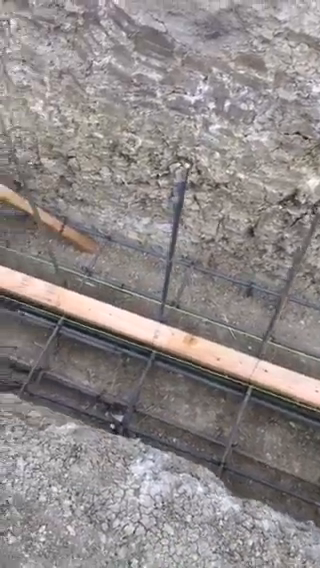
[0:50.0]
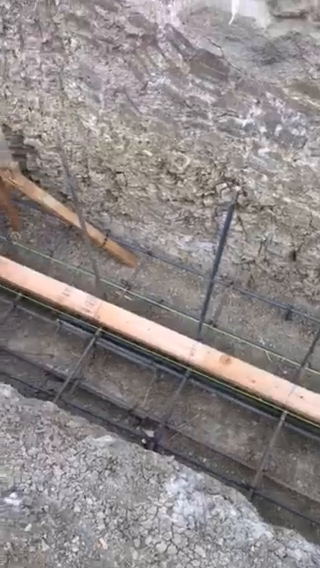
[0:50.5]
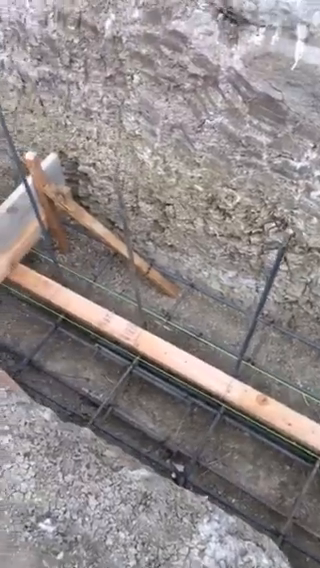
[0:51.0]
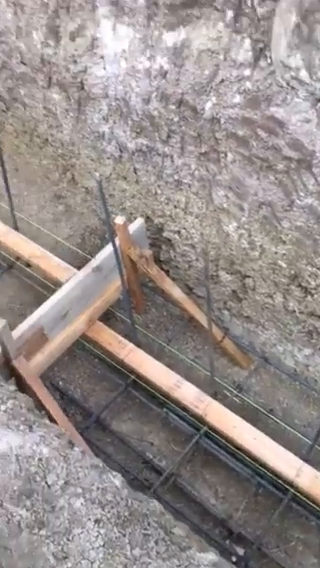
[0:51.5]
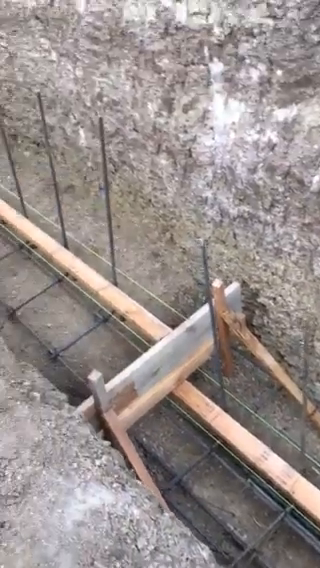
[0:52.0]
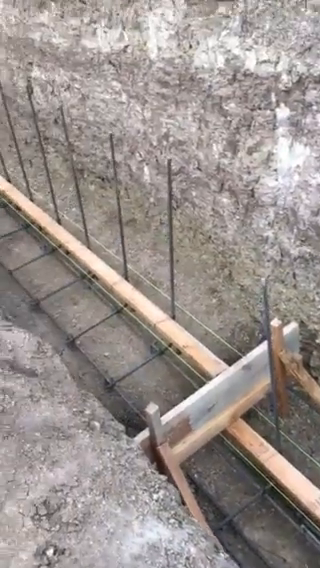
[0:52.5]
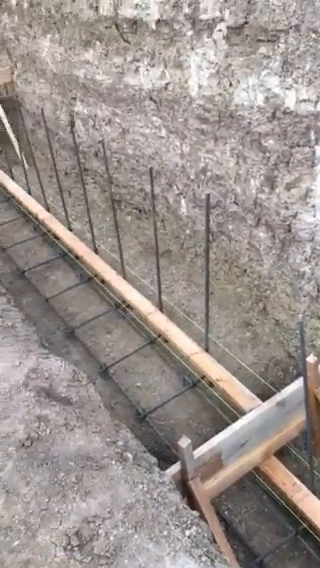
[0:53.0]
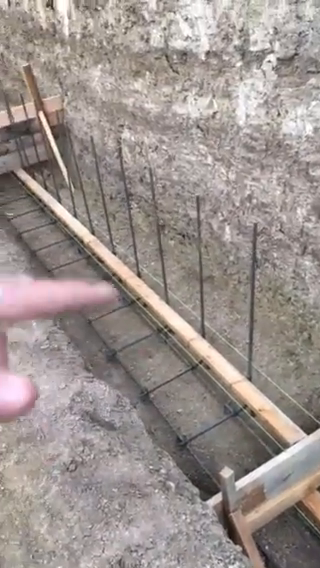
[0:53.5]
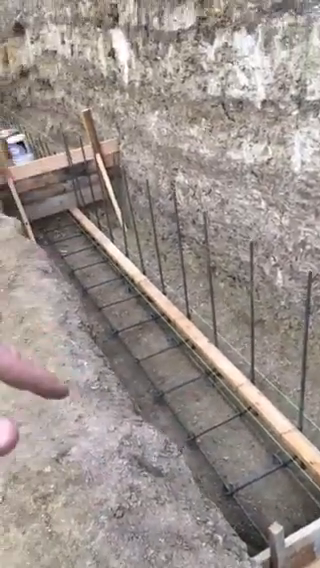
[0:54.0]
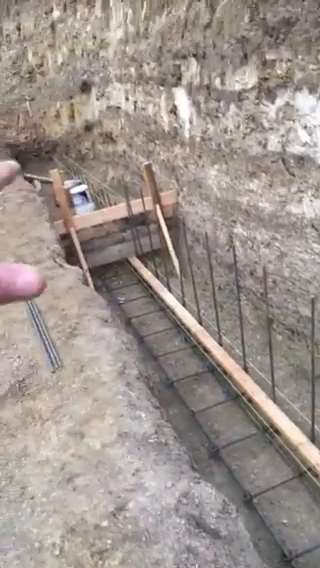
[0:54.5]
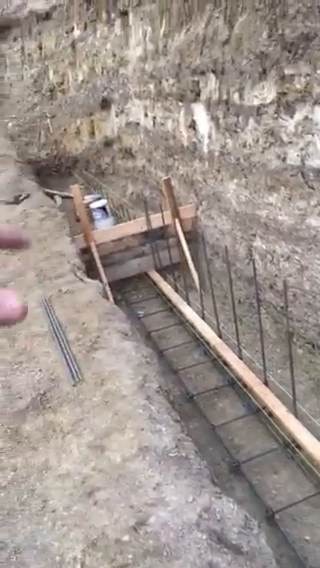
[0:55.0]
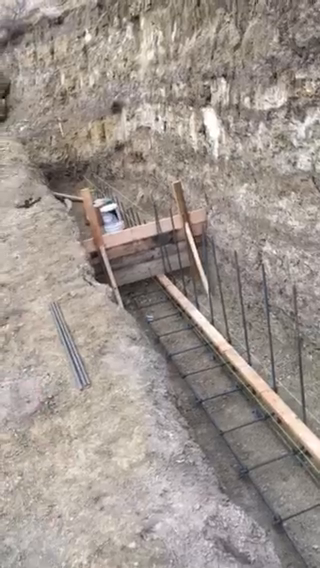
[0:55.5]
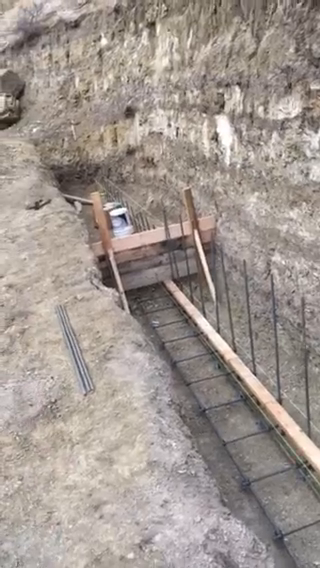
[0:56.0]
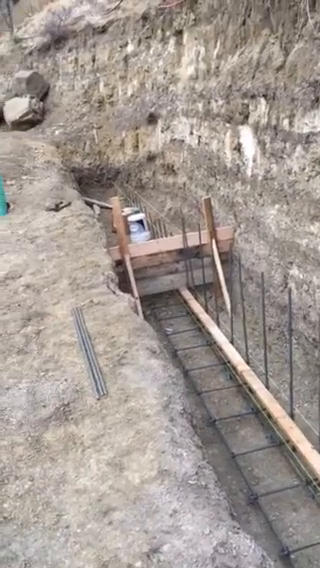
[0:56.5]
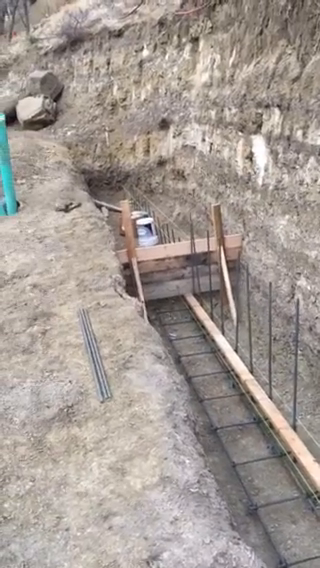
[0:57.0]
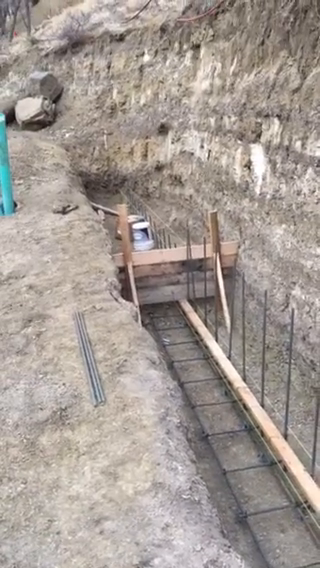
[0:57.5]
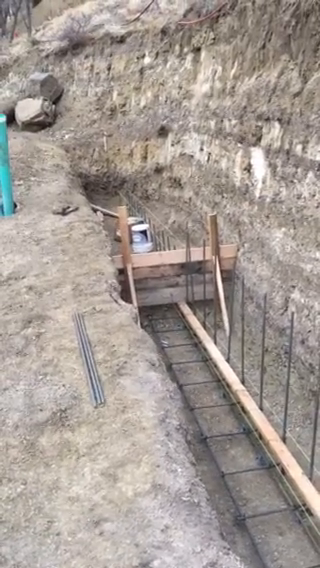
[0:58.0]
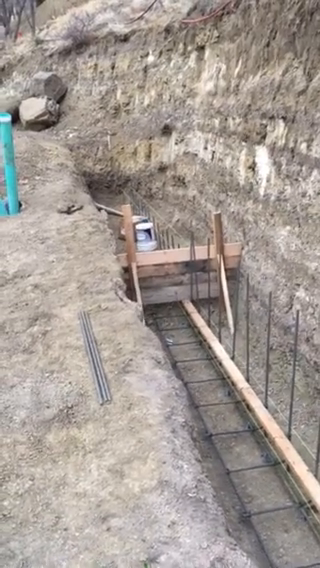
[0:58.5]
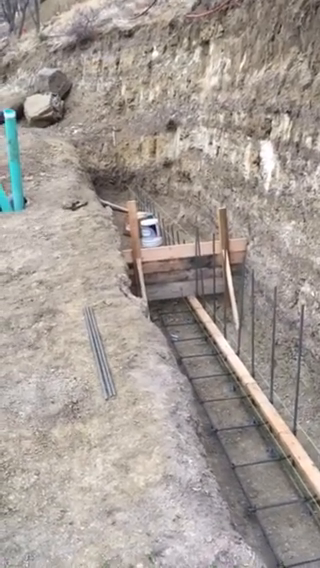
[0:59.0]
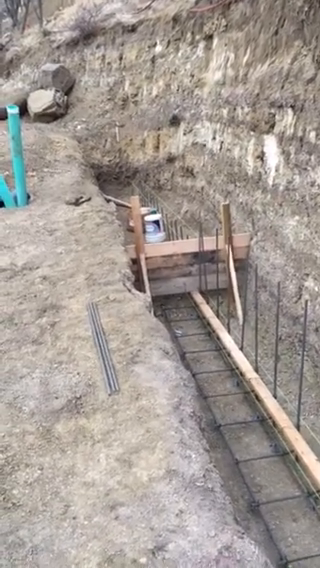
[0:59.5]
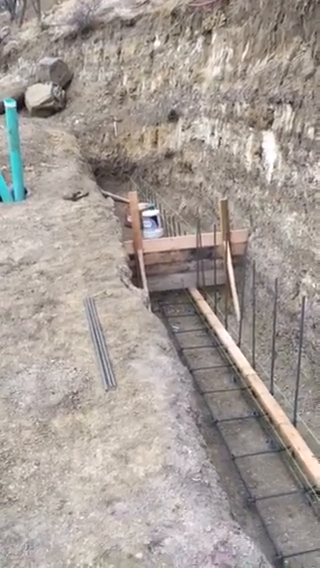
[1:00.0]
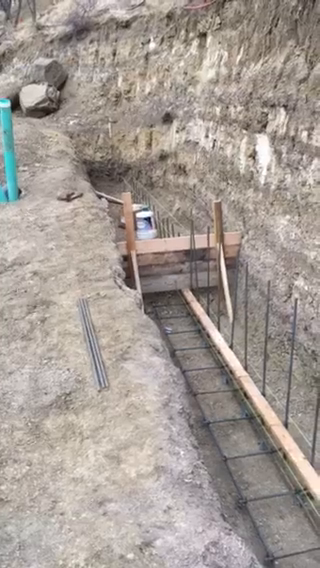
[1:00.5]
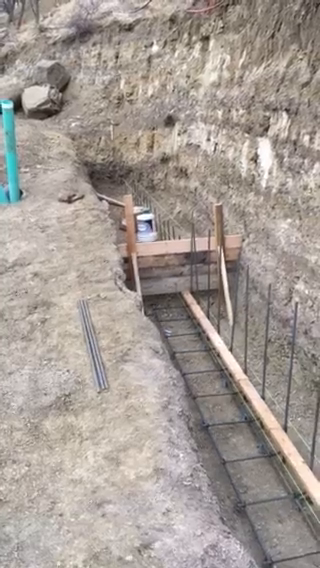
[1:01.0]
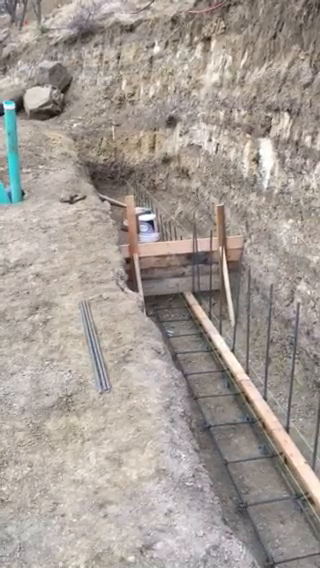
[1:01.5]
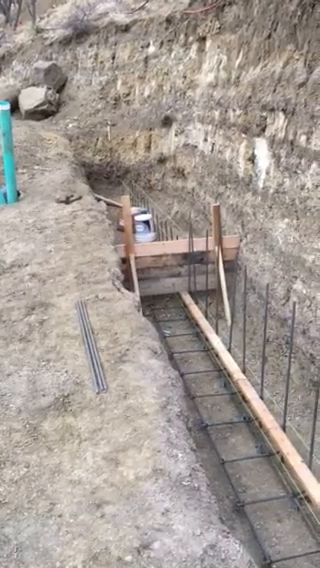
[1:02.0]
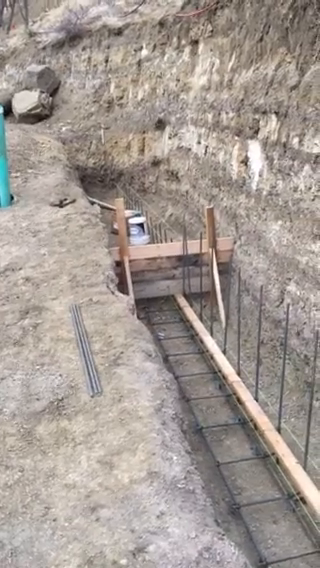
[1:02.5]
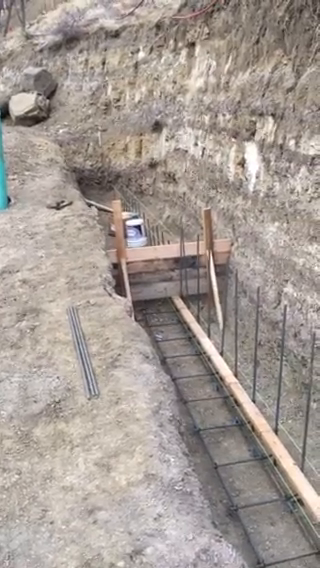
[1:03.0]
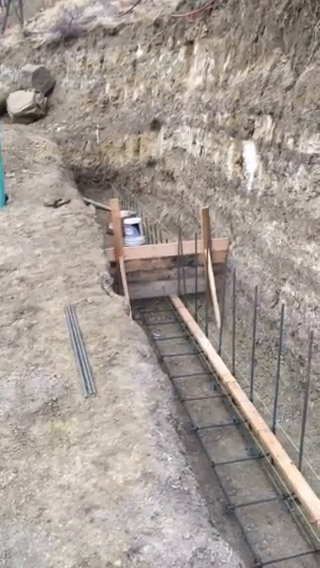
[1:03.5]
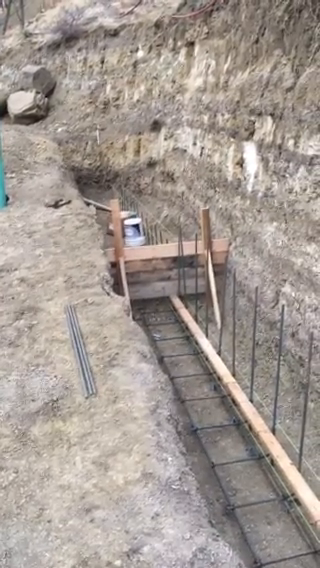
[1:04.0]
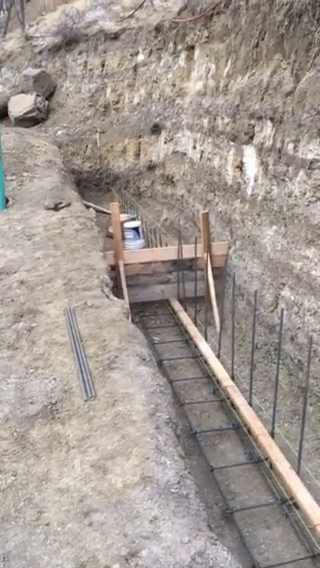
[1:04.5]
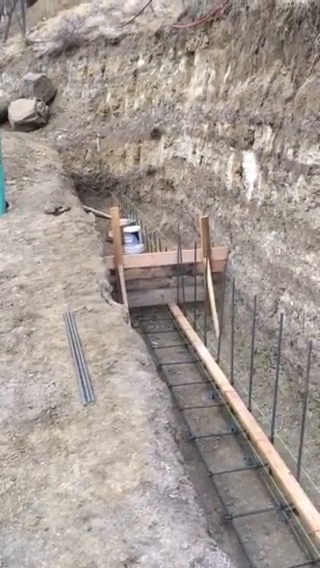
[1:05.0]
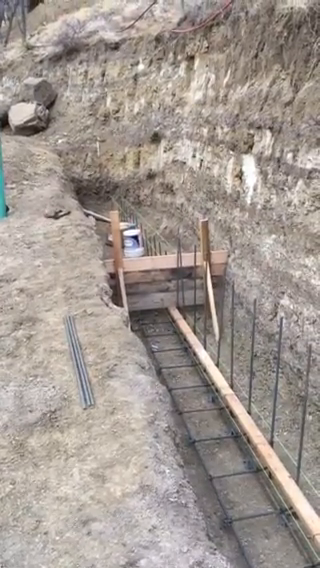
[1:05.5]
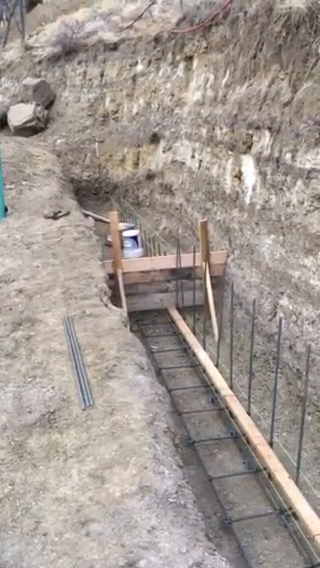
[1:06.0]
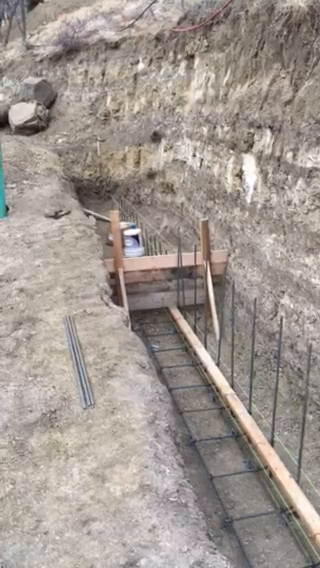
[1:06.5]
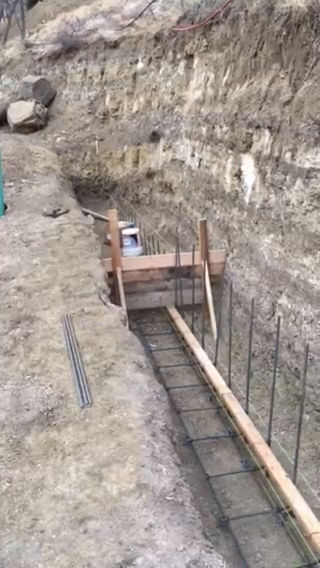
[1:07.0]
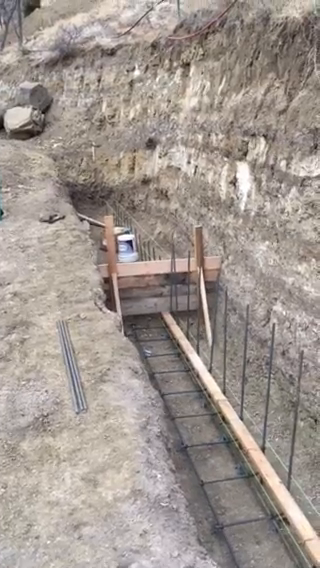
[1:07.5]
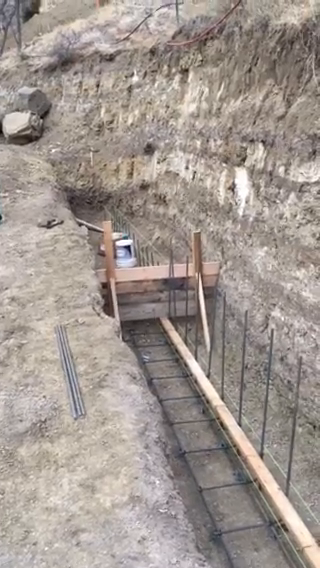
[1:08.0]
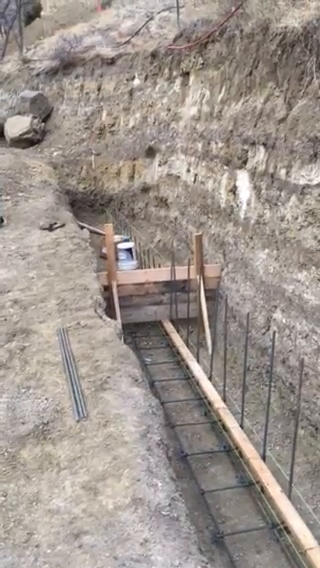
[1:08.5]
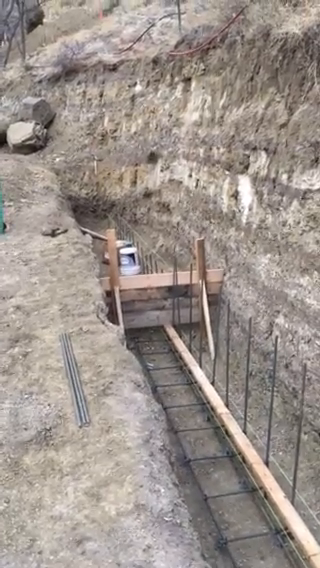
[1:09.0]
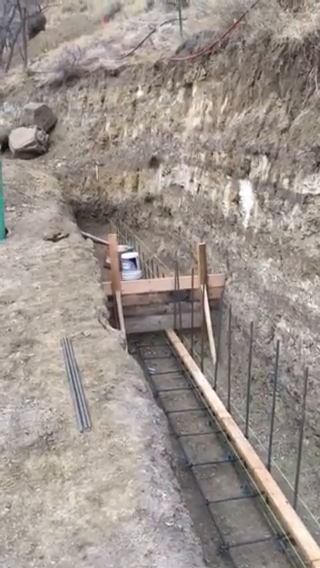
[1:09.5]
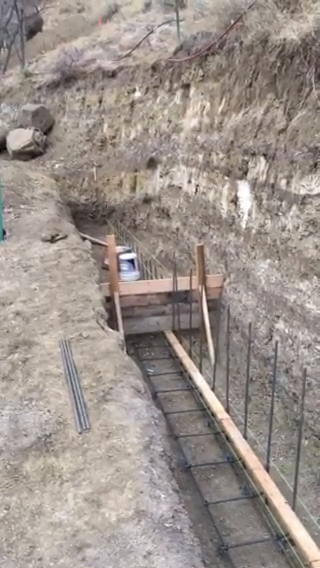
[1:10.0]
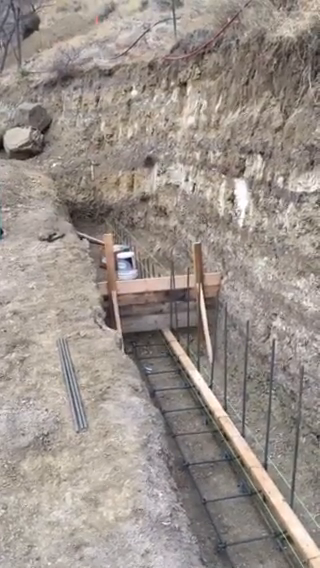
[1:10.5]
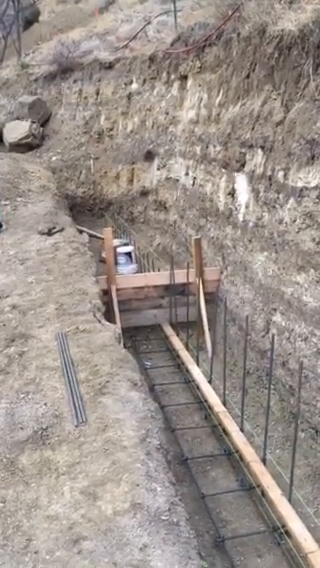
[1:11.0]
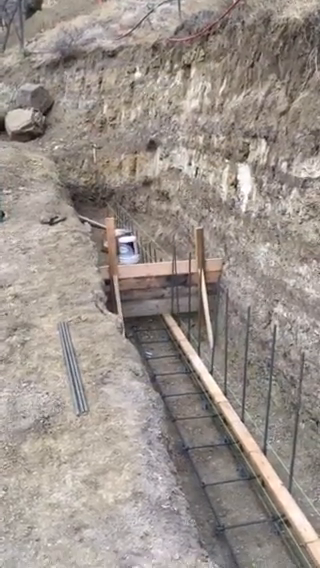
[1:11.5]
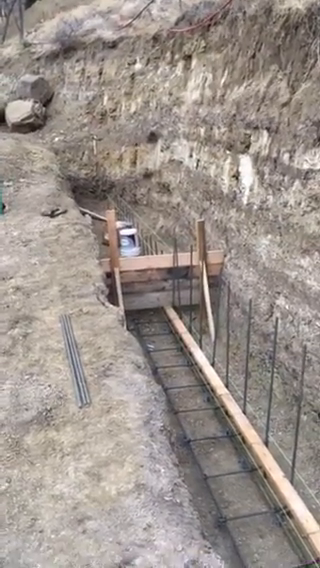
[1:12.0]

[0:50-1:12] The video finishes with a close-up of the furrow and the erected metal plates while a hand moves along, pointing in the direction of the excavation. The camera slowly moves back, zooming in for a closer view of the dug furrow. A person's arm with a ring on a finger appears, pointing deep into the furrow, and the camera zooms in again, then zooms out. The camera moves closely from where the furrow began toward the excavation. Far beyond where the excavation has reached, there are demarcations with green poles that have been erected, perhaps to mark the construction site. The floor of the furrow has been laid with steel metal, and the furrow has been dug very deep, perhaps to lay a piping system.